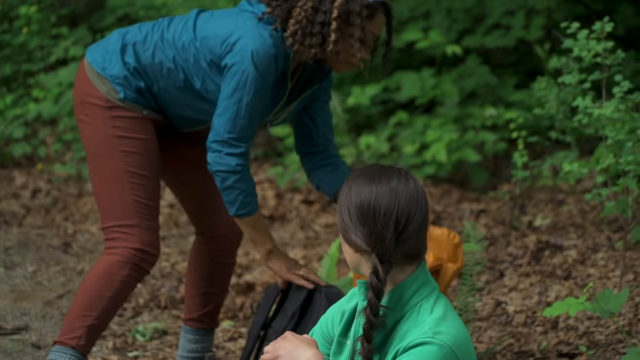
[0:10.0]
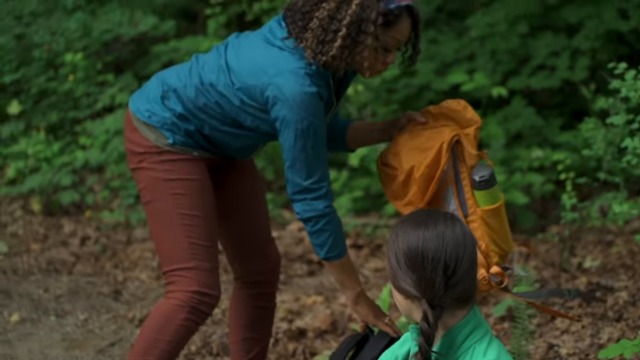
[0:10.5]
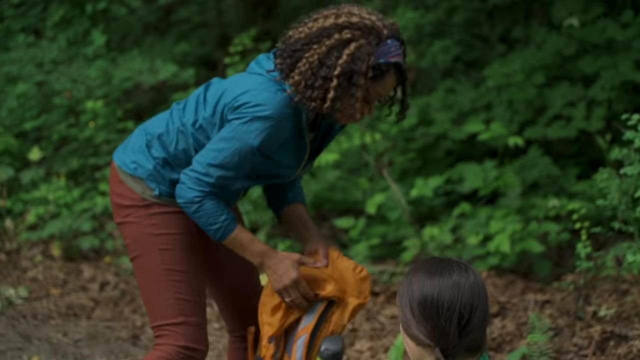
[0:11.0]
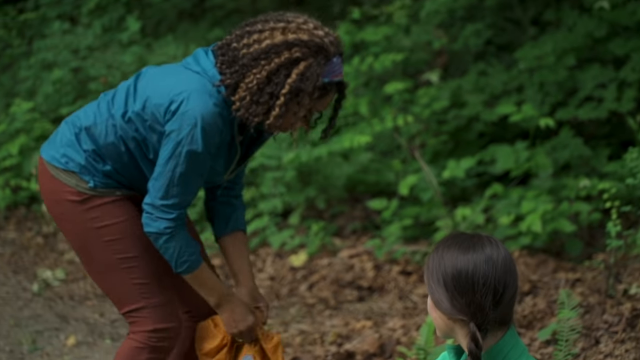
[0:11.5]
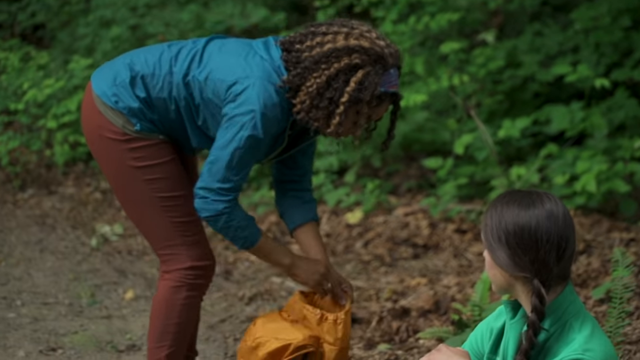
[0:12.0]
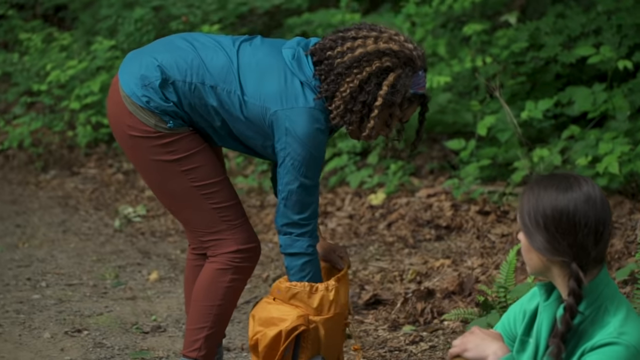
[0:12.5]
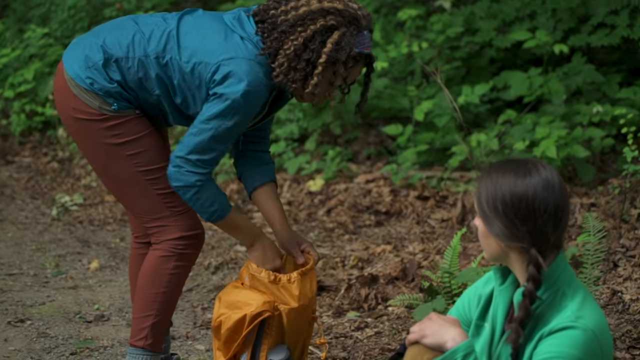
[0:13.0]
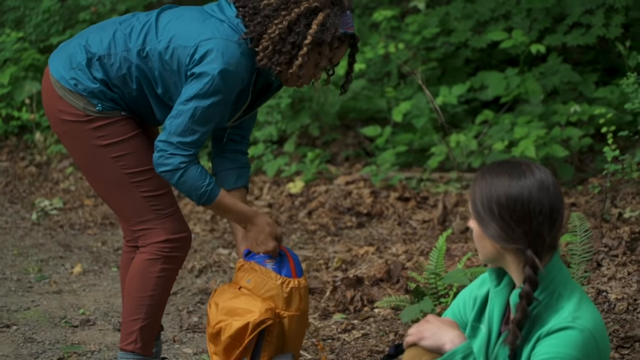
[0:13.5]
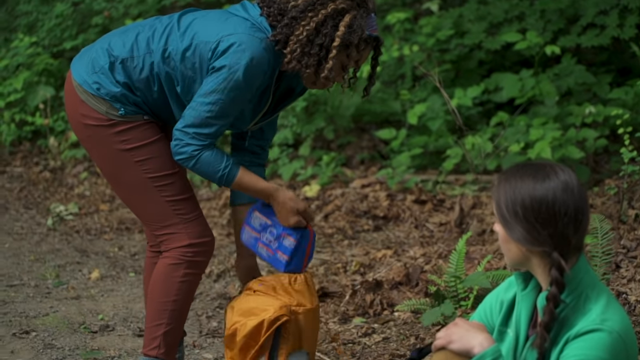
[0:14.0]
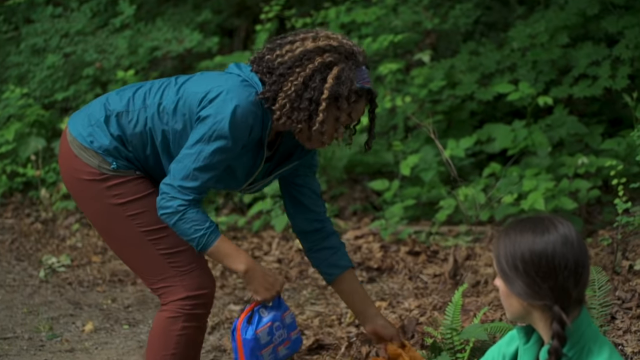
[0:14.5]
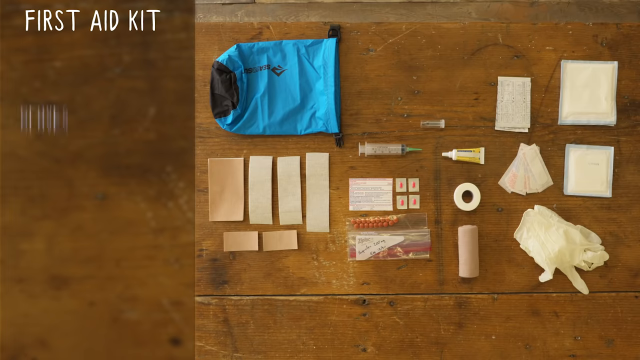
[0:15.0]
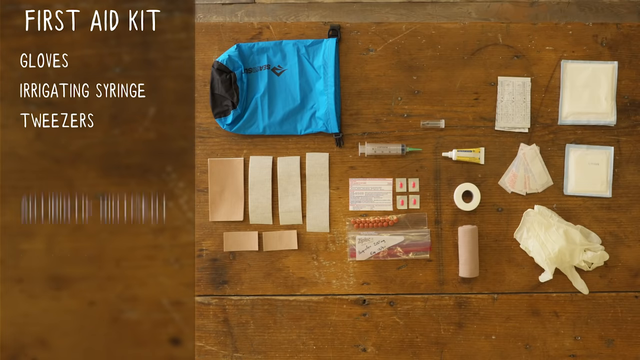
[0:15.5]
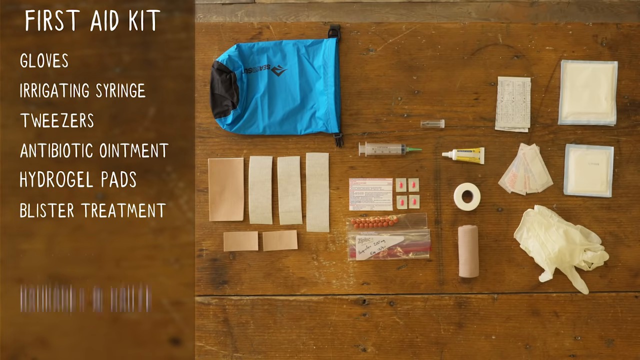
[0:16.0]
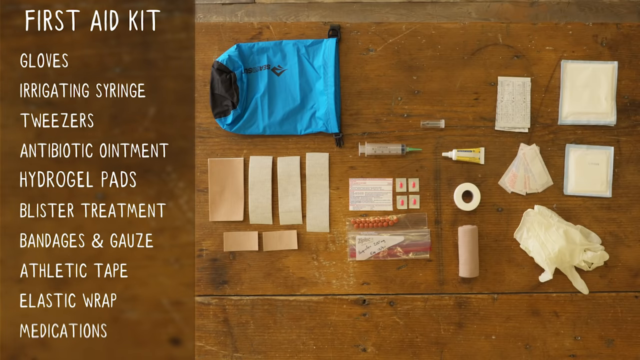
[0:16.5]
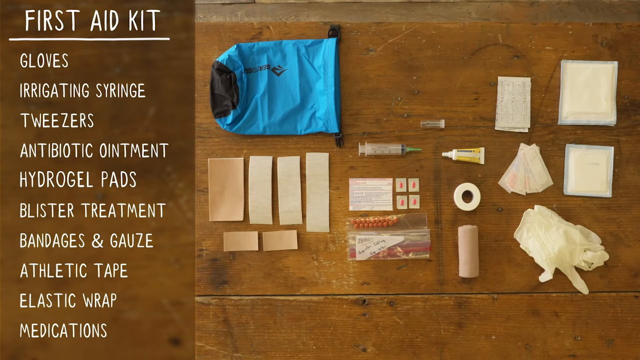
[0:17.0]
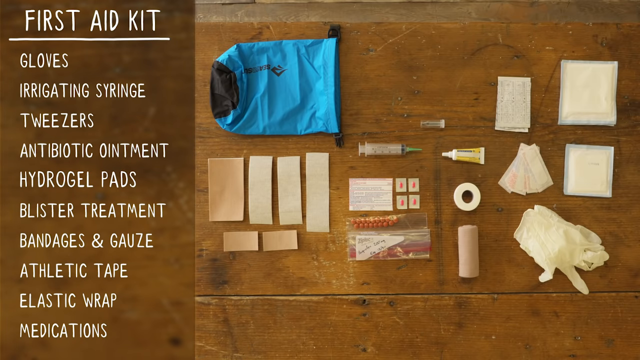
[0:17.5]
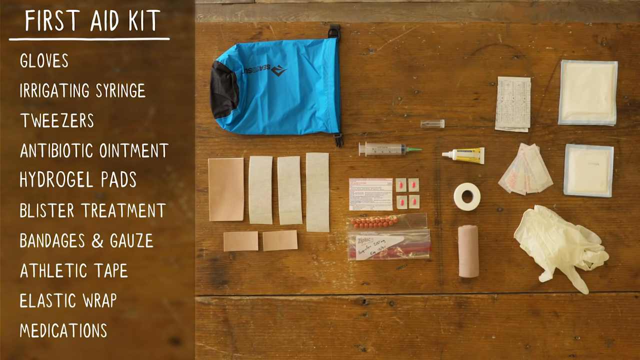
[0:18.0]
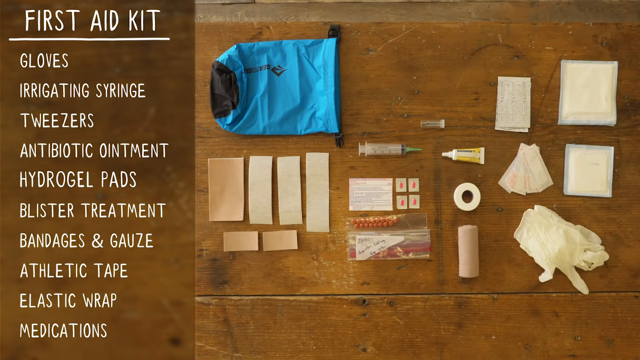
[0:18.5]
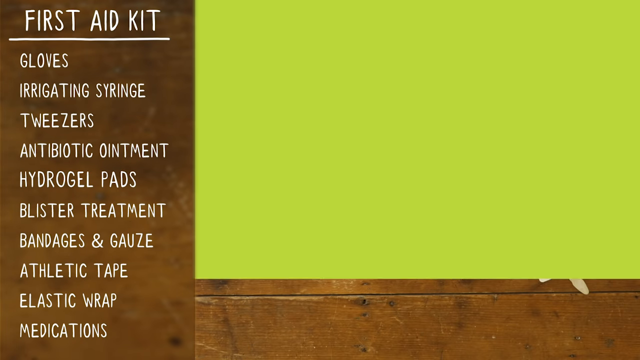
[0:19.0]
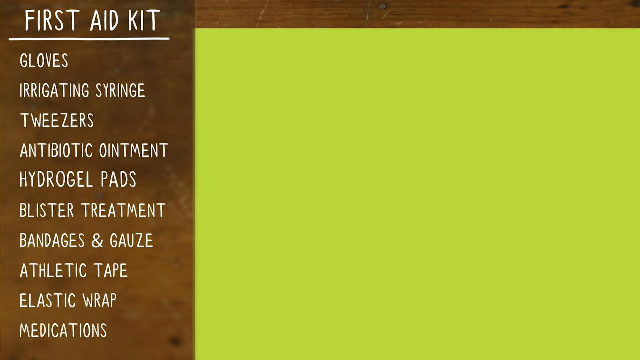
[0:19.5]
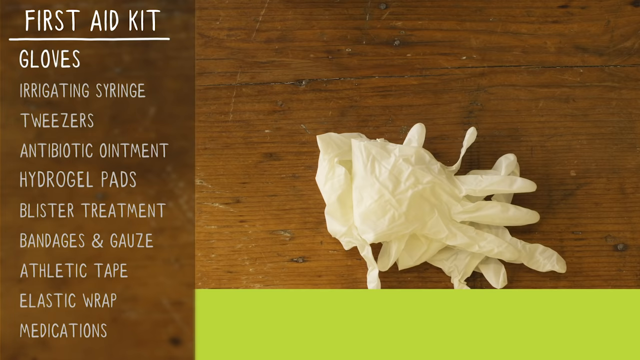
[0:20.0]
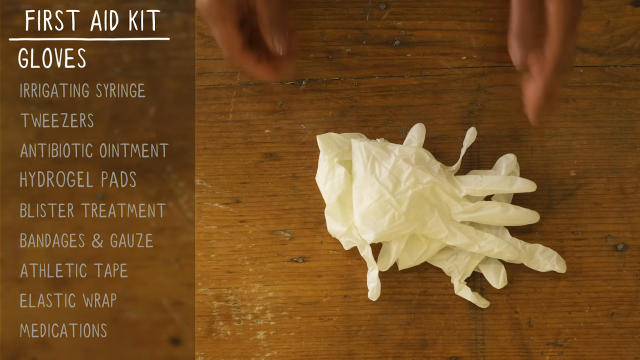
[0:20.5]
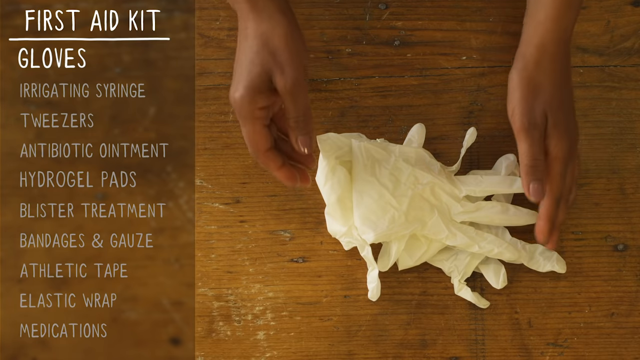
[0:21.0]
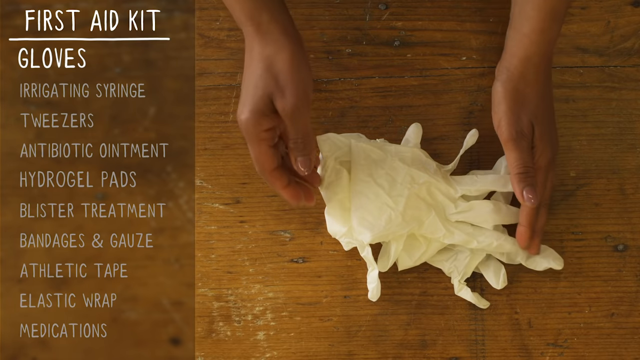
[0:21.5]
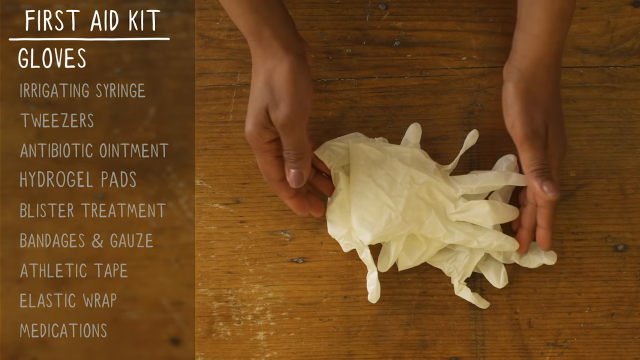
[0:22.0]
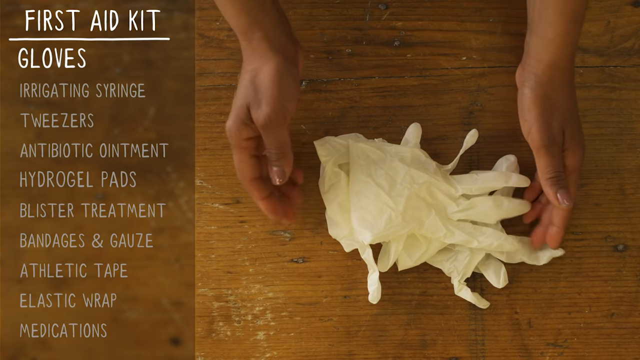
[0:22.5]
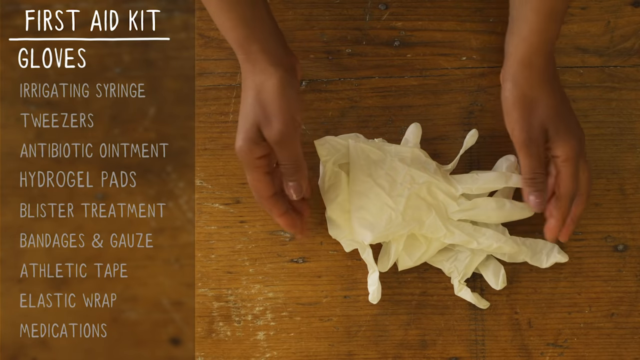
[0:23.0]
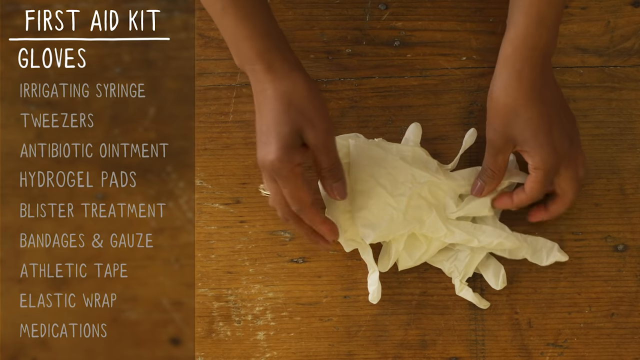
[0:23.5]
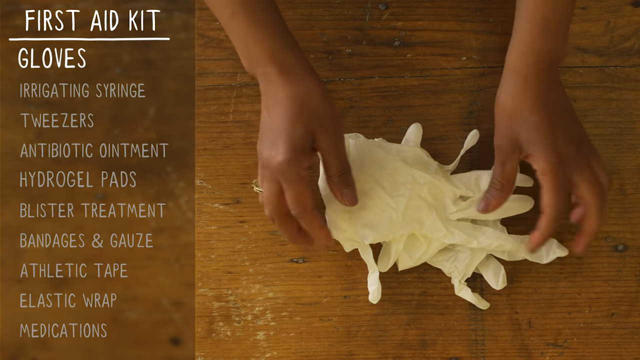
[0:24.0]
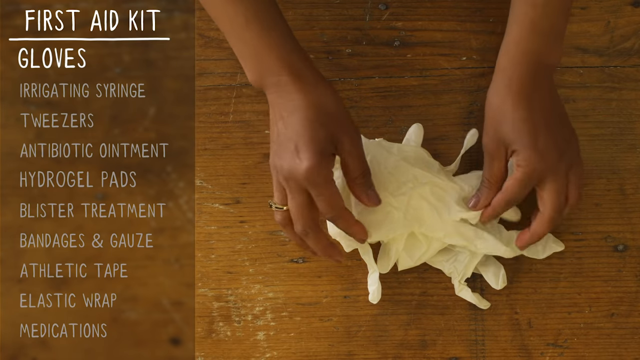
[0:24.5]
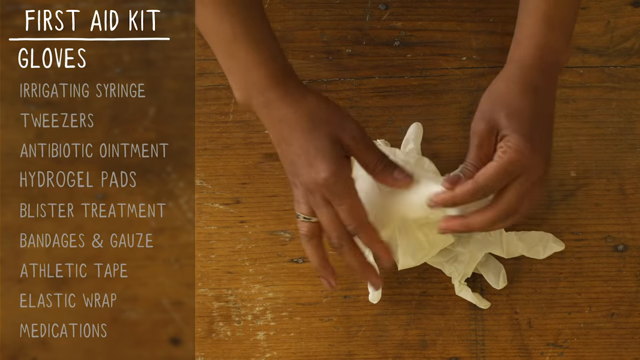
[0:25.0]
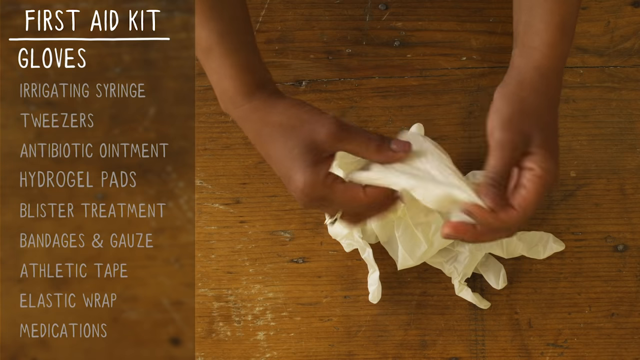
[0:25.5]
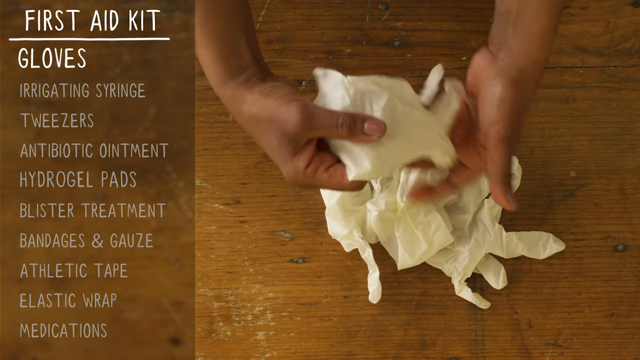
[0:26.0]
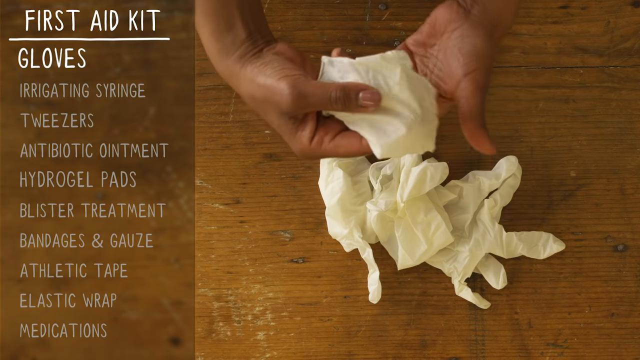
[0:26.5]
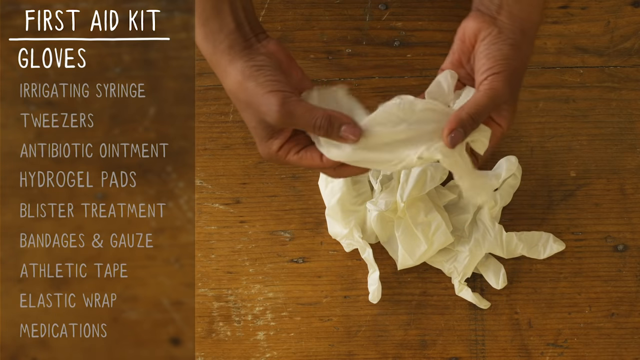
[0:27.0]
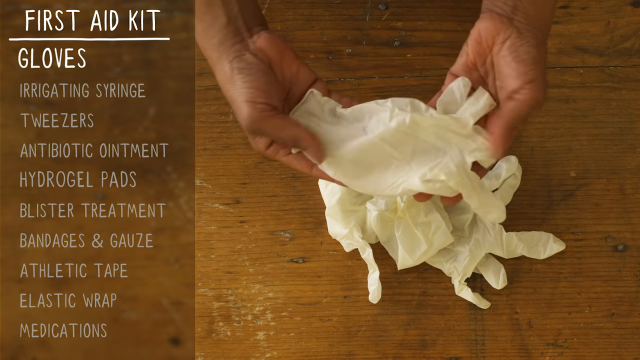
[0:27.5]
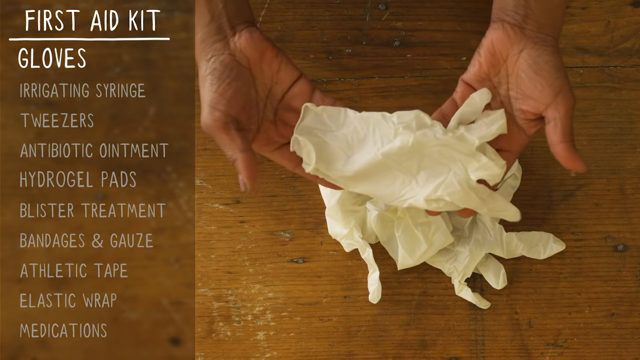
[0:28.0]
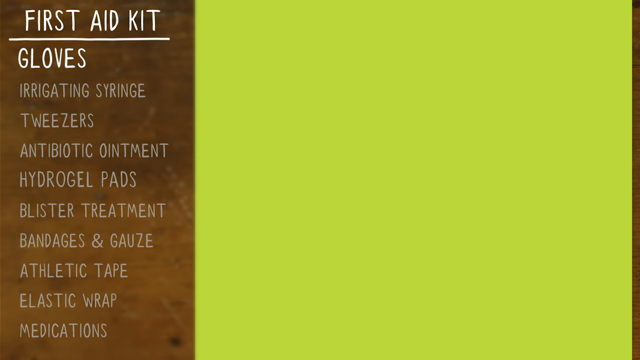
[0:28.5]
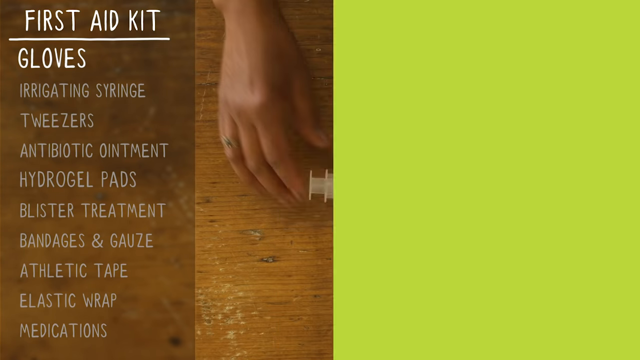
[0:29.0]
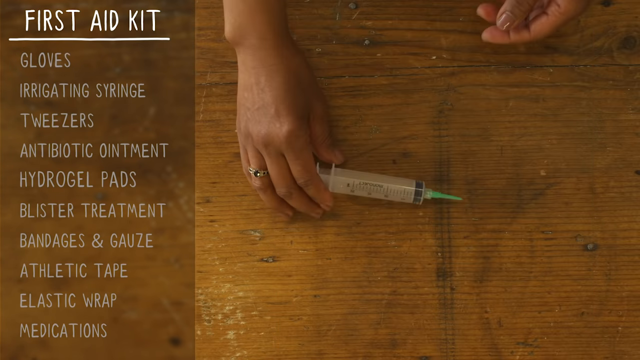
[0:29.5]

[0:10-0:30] Outside in a wooded area, on what looks like a hiking trail, an African American girl with curly brown hair, a blue long-sleeved shirt and brown pants is in the center of the shot. She reaches into an orange backpack and pulls out a blue first aid kit. Sitting on the ground of the trail next to her is a Caucasian girl with long brown hair, a green shirt and brown pants, her right leg extended outward and her right shoe taken off. It appears that she has injured her leg and that the African American girl is using the contents of the first aid kit to fix it up. The screen then cuts to a list of the supplies inside the first aid kit, in white all-capital letters: "first aid kit, gloves, irrigating syringe, tweezers, antibiotic ointment, hydrogel pads, blister treatment, bandages and gauze, athletic tape, elastic wrap, and medications".